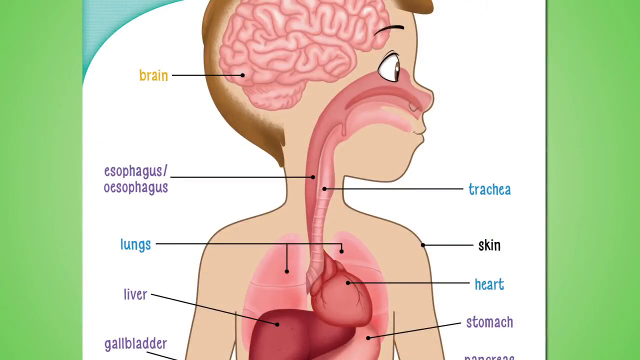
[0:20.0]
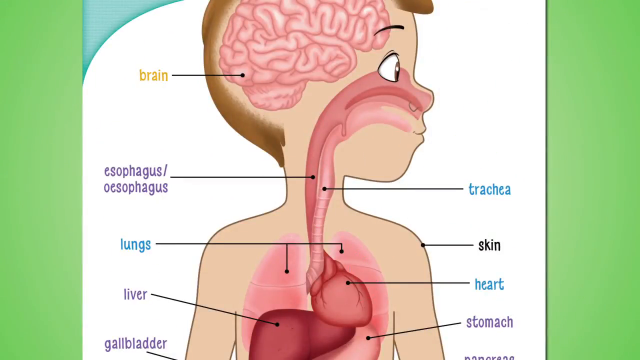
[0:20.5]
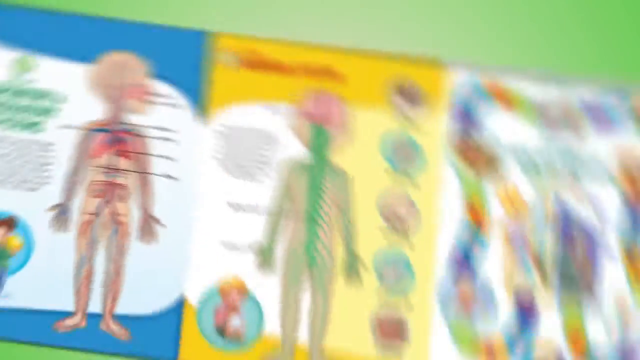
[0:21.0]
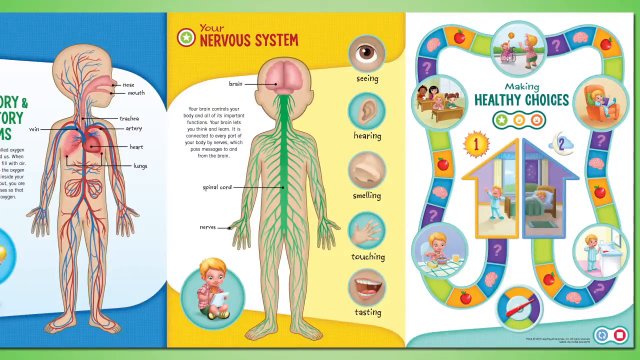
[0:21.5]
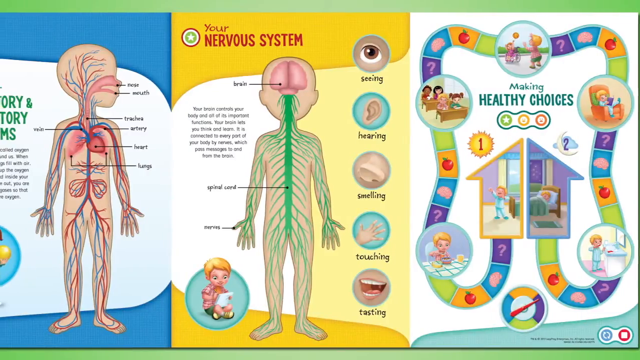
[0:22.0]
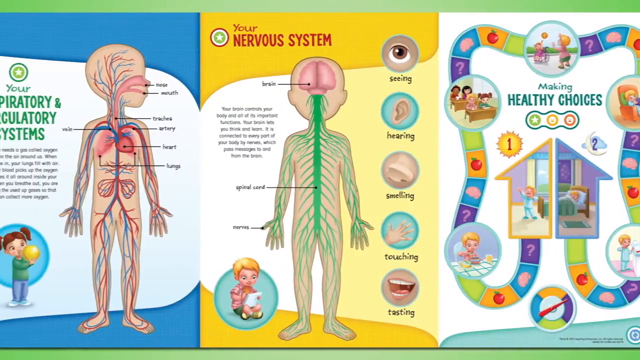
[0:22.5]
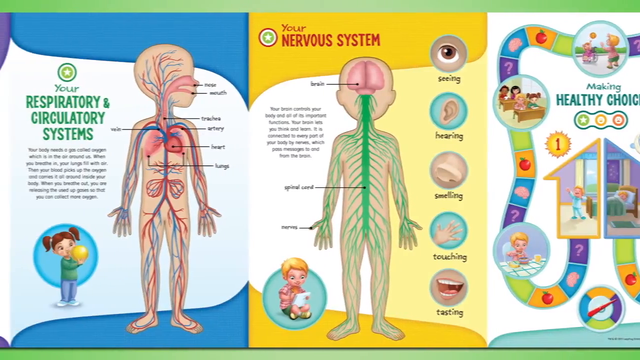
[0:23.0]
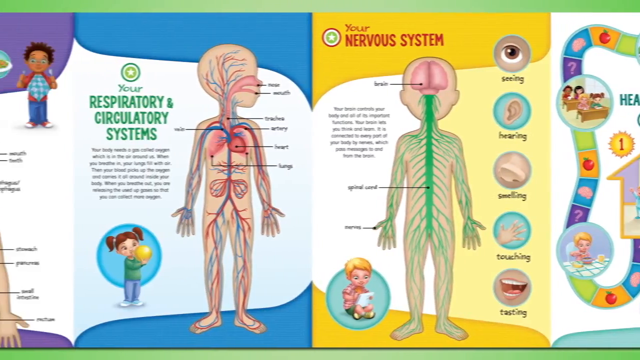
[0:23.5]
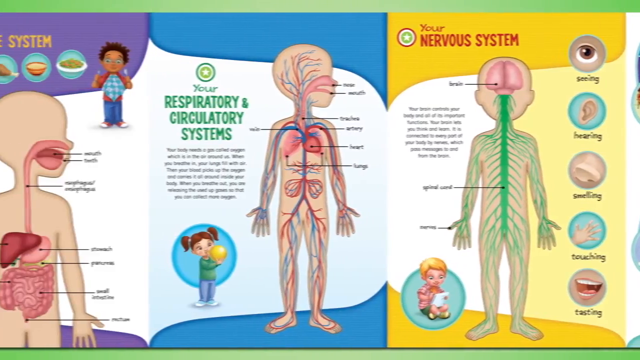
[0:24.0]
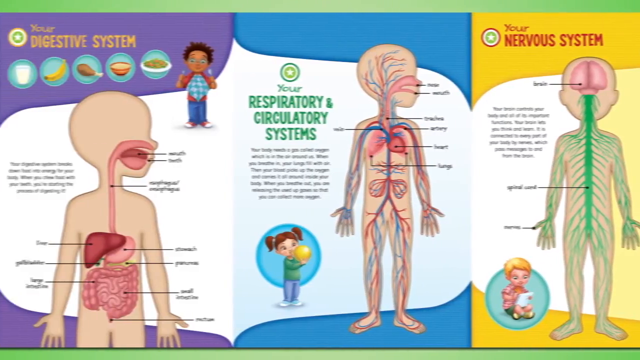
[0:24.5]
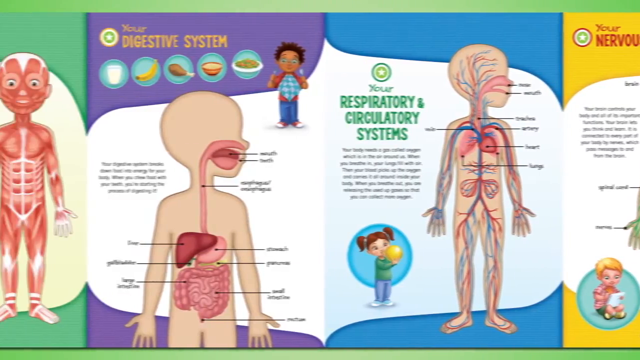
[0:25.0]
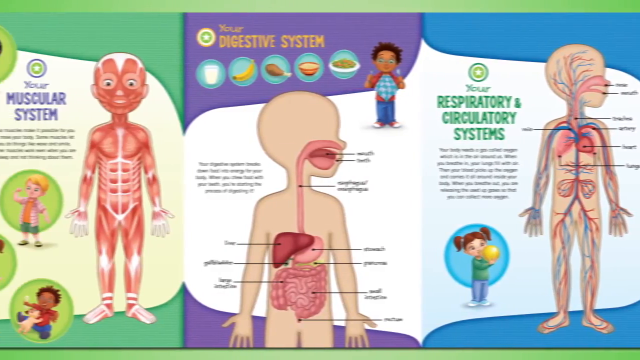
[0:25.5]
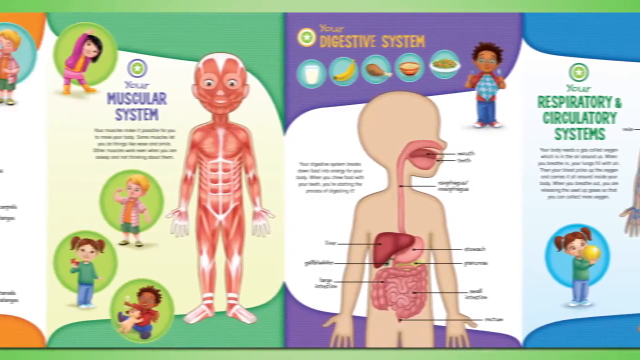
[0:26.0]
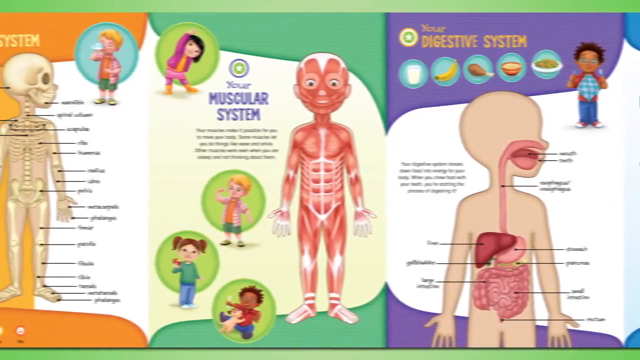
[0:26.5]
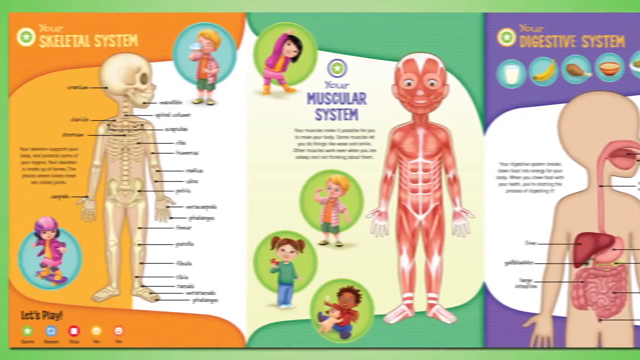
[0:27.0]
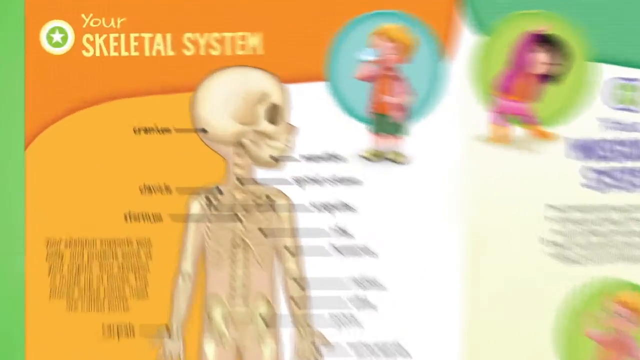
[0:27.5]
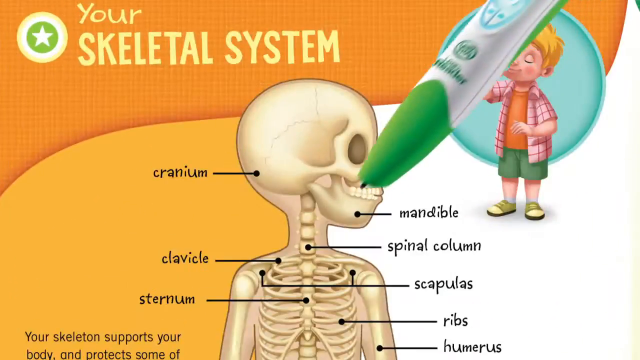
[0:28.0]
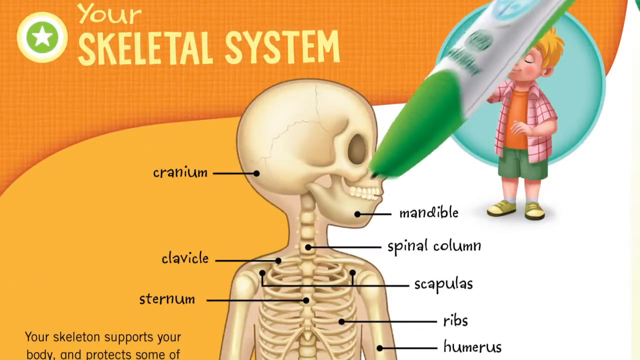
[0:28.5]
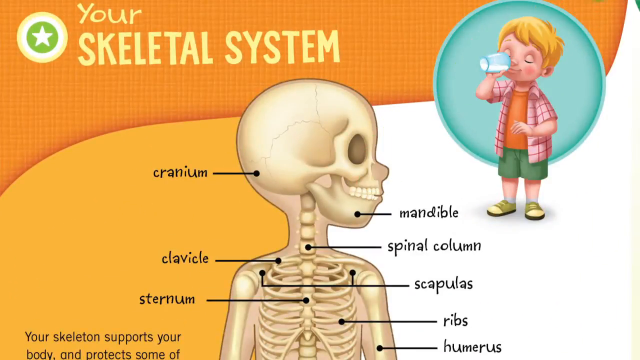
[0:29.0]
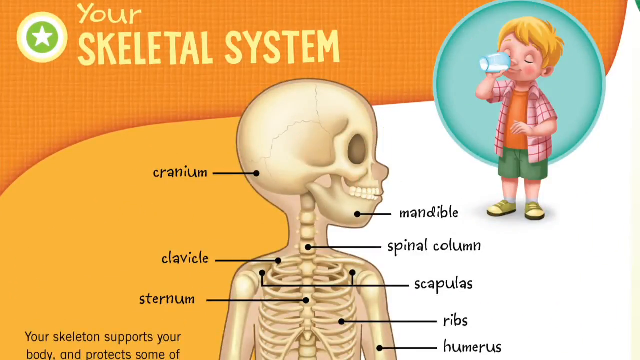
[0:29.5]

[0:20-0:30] A diagram of a human has labels pointing to the brain, the esophagus, the lungs and the liver on the left side, and to the trachea, the skin, the heart and the stomach on the right side. The diagram's background is white, and the background of the screen shows a brain on the side. The human in the diagram has eyes wide open. The view flips to show different diagrams in three segments. The first segment is a human body with pointers to different body parts shown in black. The second segment shows the senses: seeing, hearing, smelling, touching and tasting. Each corner shows different captions. The last caption has a white background, the middle section a yellow background, and the first caption a blue background.